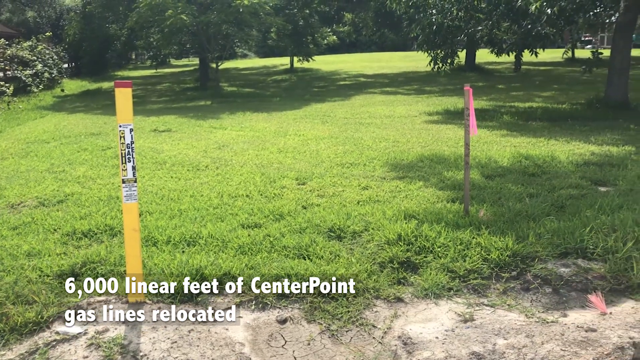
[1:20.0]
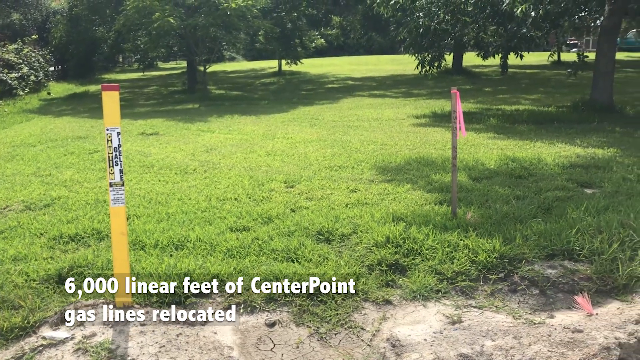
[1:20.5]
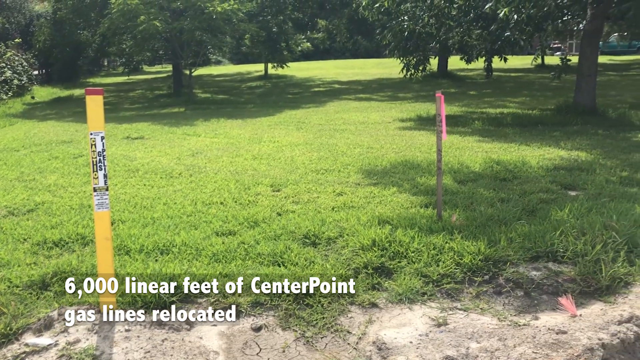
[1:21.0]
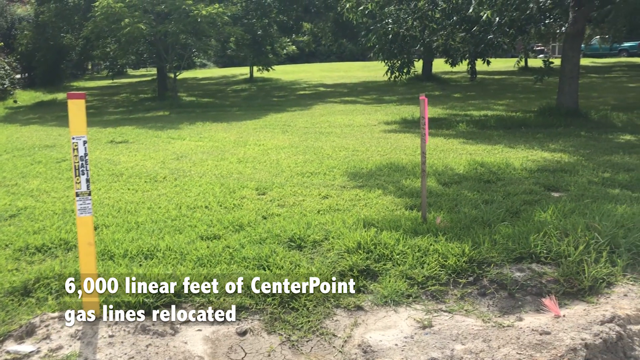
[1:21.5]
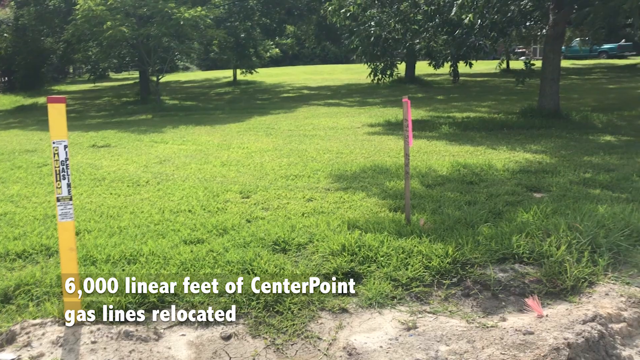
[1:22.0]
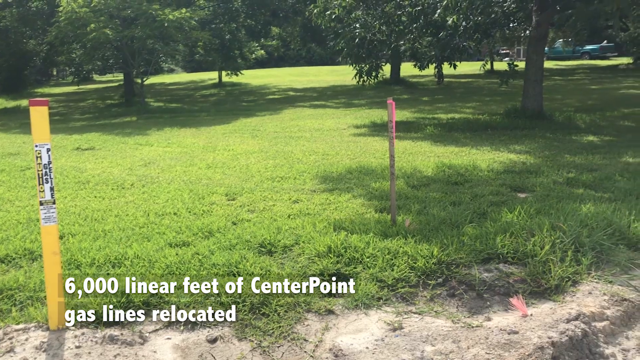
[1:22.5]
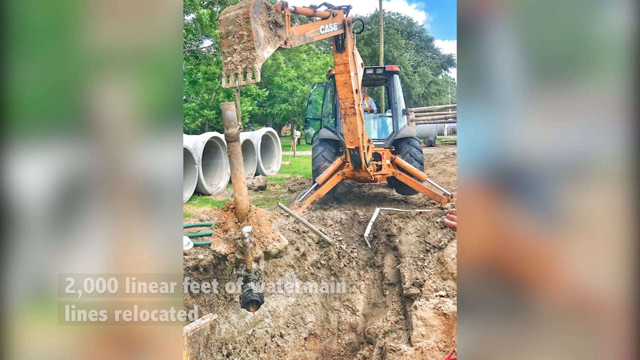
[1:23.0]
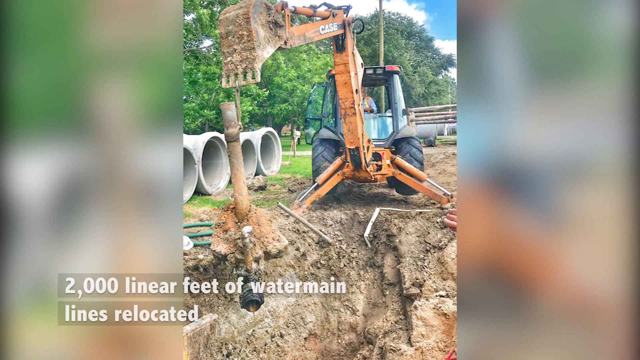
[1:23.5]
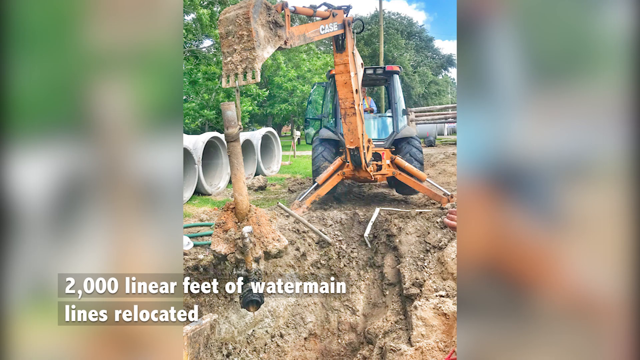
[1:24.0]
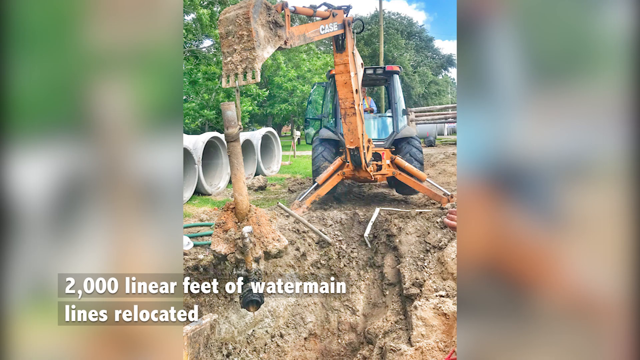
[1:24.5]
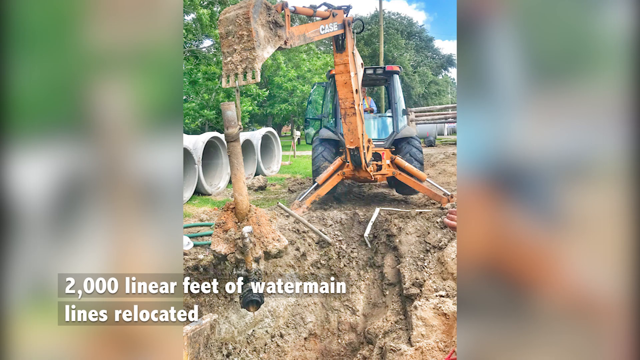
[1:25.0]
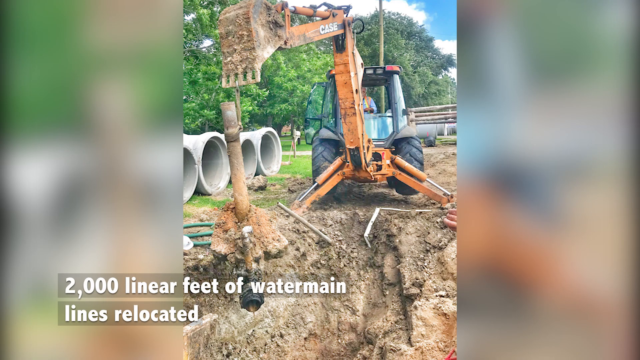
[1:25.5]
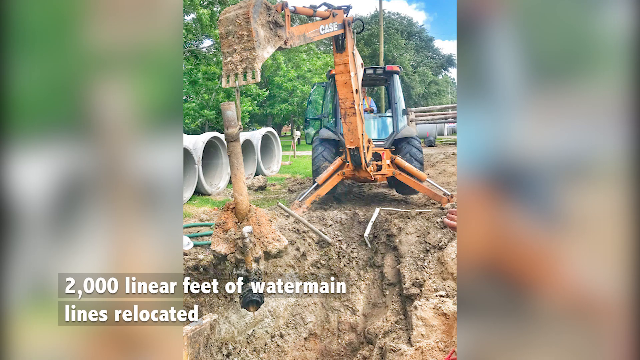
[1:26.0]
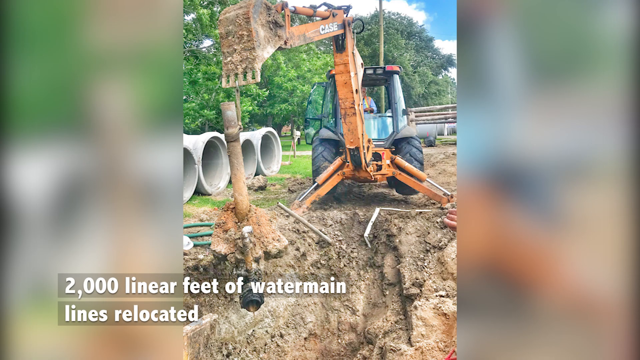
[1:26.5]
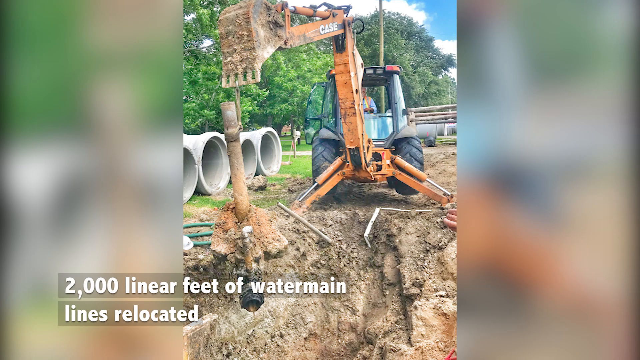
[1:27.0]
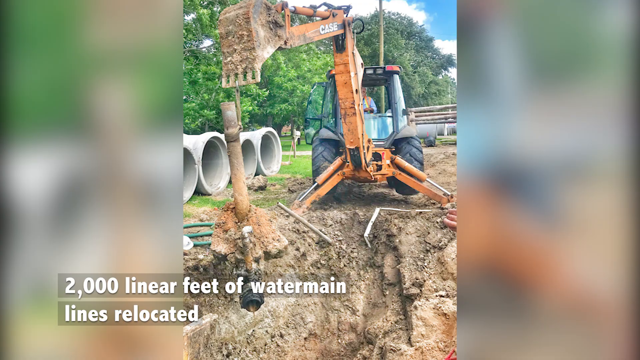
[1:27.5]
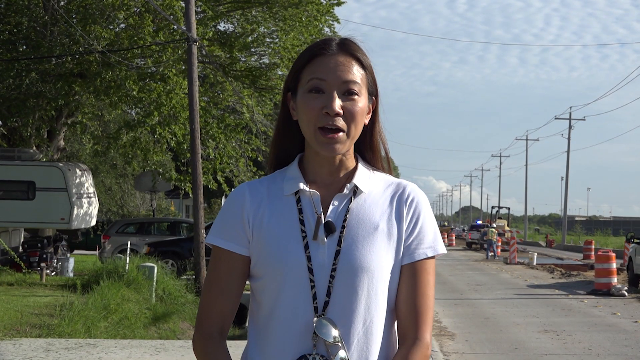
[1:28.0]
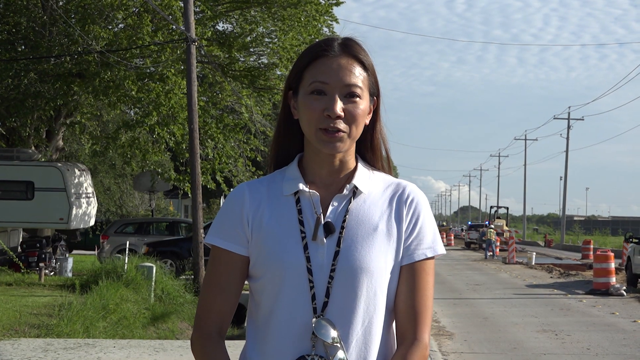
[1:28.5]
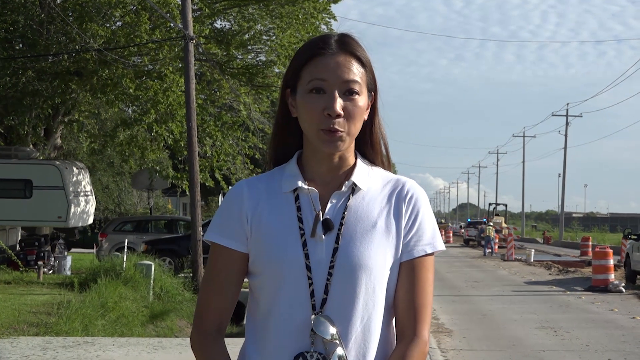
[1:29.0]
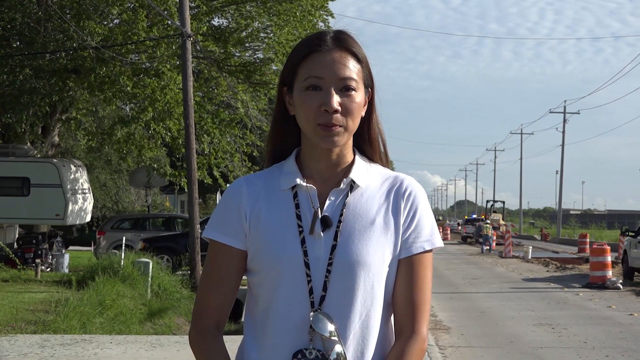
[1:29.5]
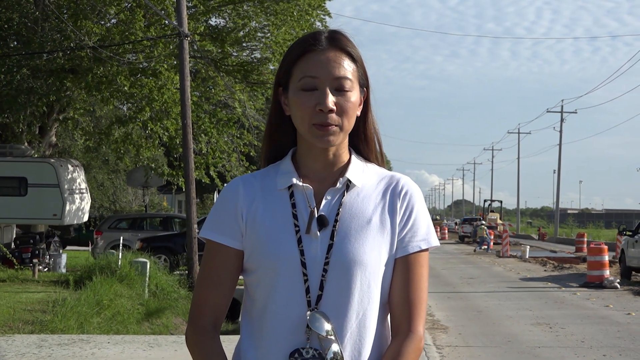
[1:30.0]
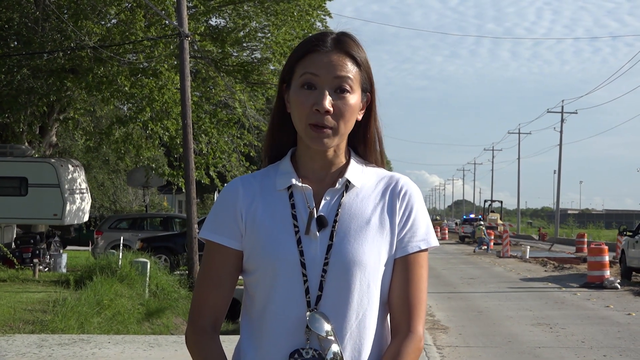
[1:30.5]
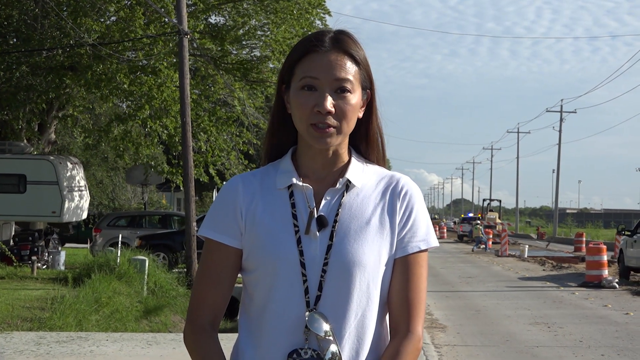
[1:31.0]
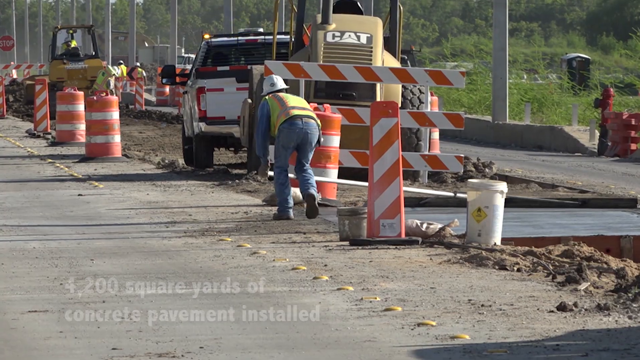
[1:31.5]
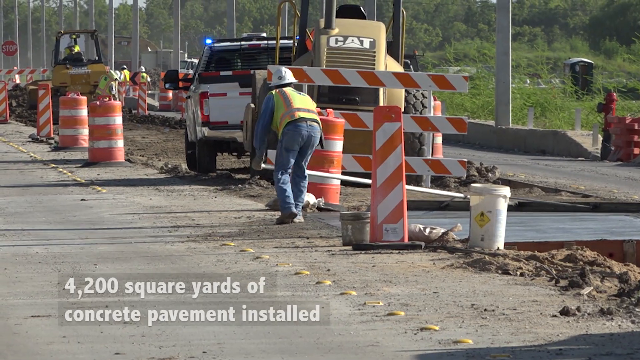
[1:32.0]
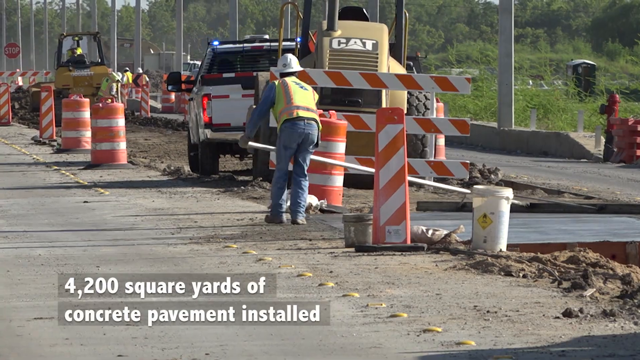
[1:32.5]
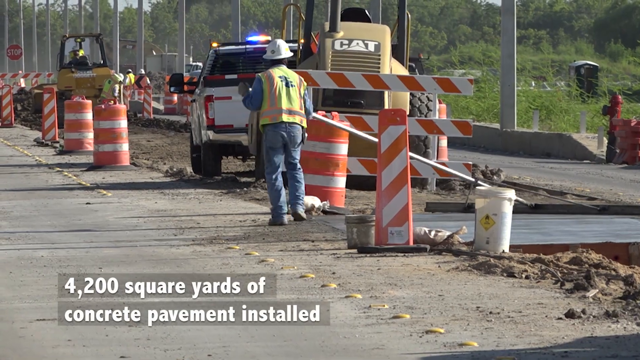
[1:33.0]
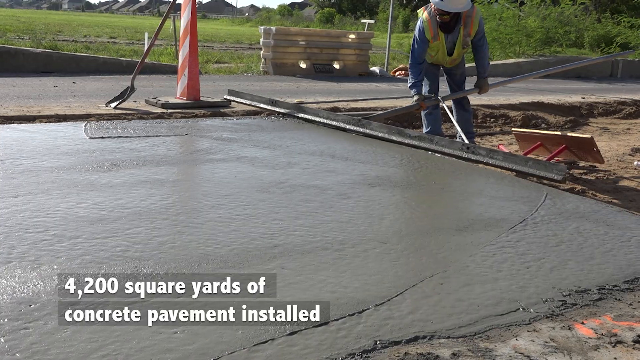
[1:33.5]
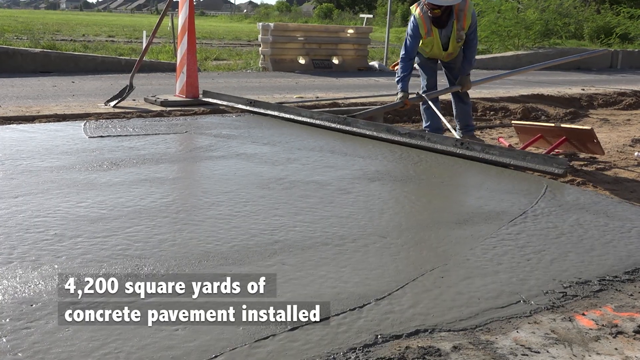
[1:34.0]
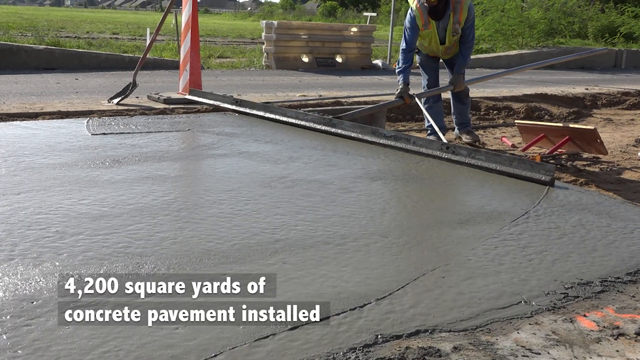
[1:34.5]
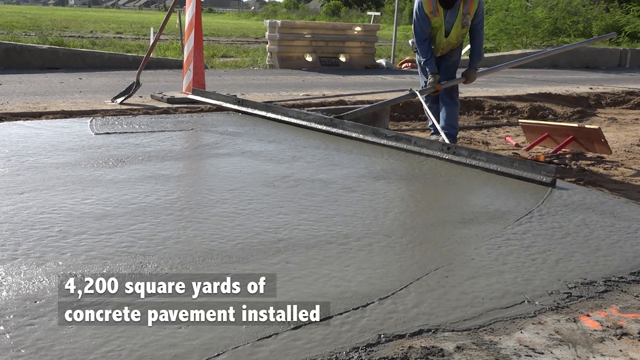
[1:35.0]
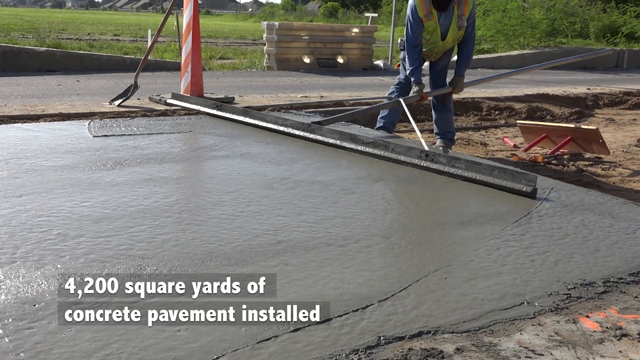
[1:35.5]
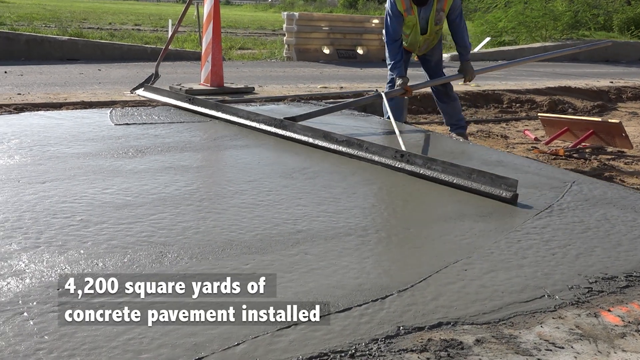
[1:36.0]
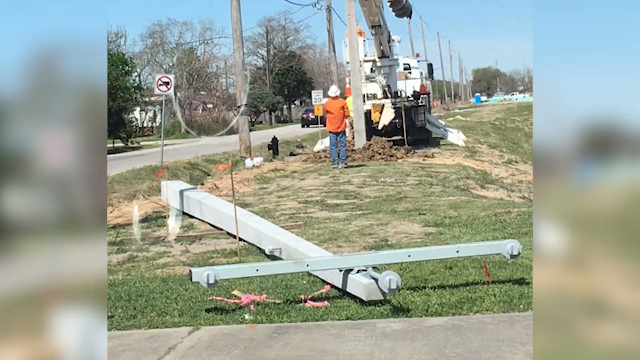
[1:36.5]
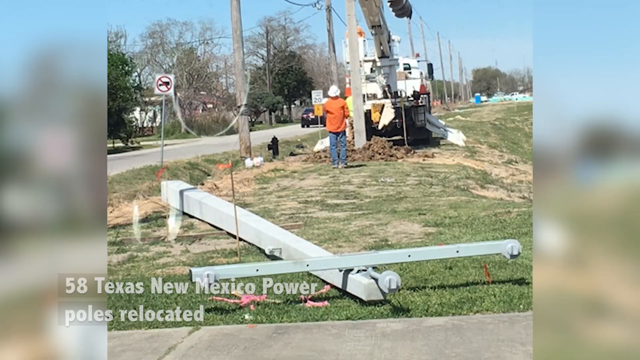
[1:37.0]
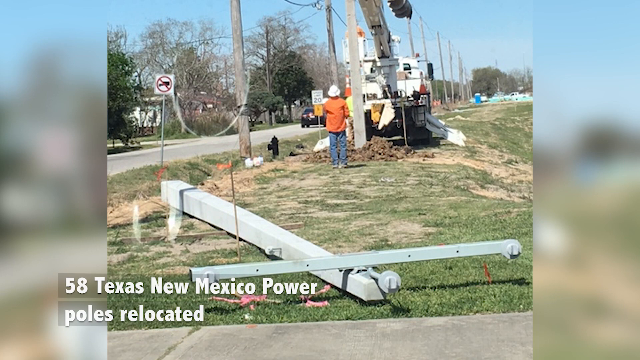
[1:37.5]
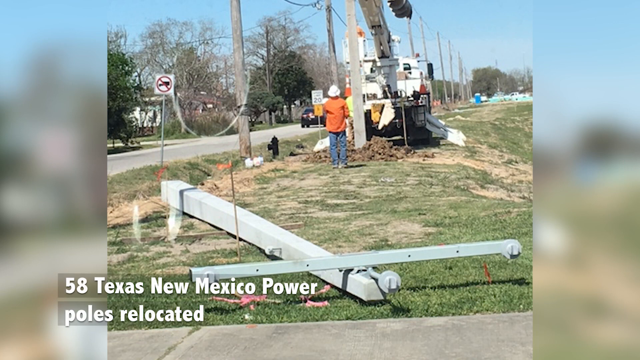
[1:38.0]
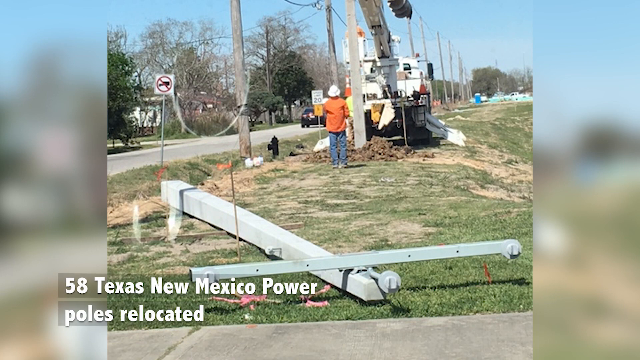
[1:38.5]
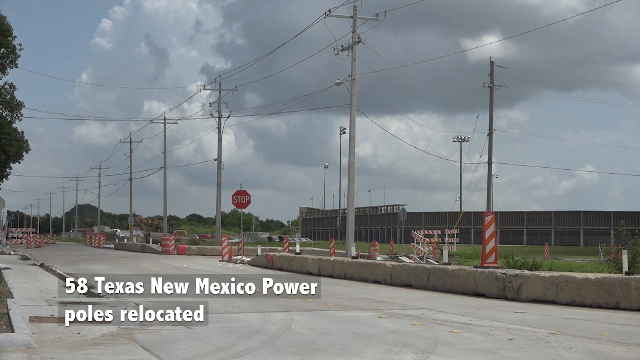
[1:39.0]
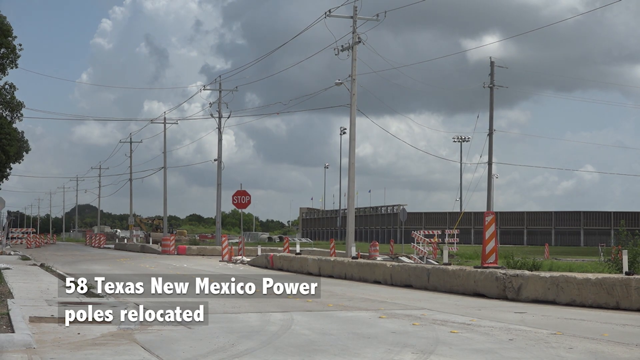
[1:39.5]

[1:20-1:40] The view zooms past over the yard, with text on the bottom left saying "6,000 linear feet of center point gas lines relocated". A backhoe and some type of big metal pole go into the ground; there is a lot of dirt, apparently pretty deep, with trees along the background and culverts lying on the side. The reporter talks, seen only from the waist up, wearing some type of necklace with a circular pattern. A closer view of the street shows a construction worker with his back to the camera smoothing out concrete with a very wide wooden beam, pushing the board forward; a caption in the bottom left corner says "4,200 square yards of concrete pavement installed". Next, a construction worker looks up at a power pole in front of a crane, with a pole lying on the ground, and the lower left-hand caption says "58 Texas New Mexico power poles relocated". Then the street appears after it has been paved, with no construction workers or service vehicles.